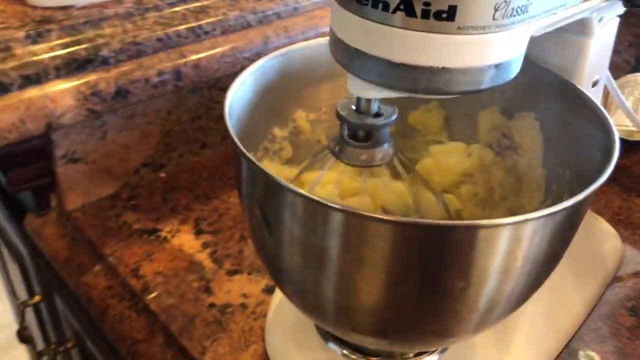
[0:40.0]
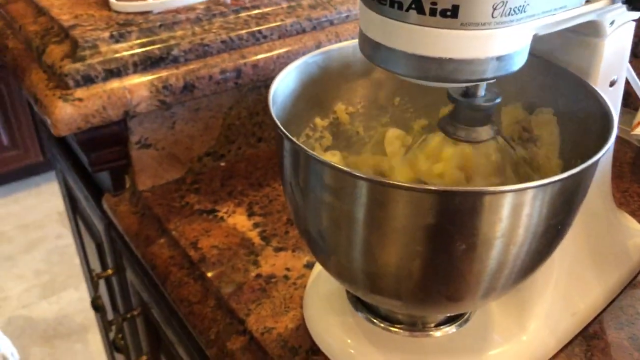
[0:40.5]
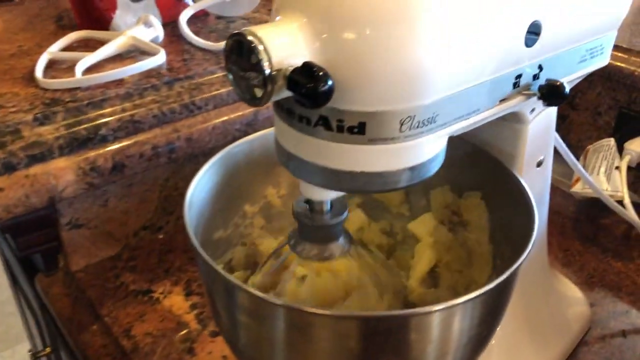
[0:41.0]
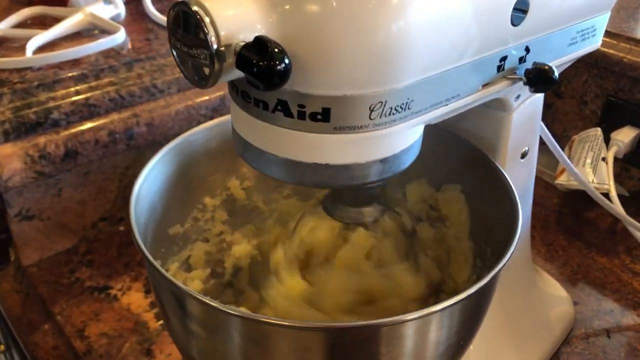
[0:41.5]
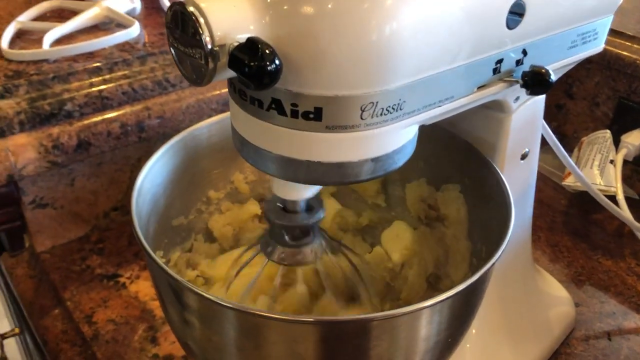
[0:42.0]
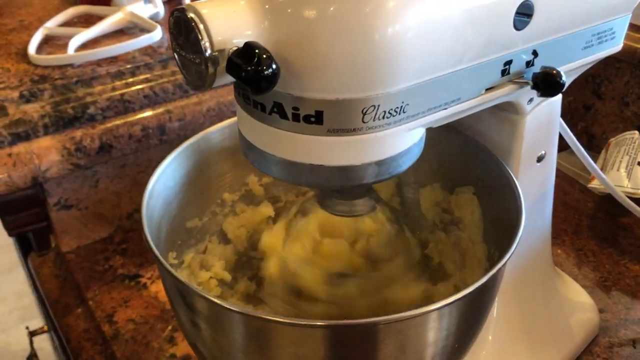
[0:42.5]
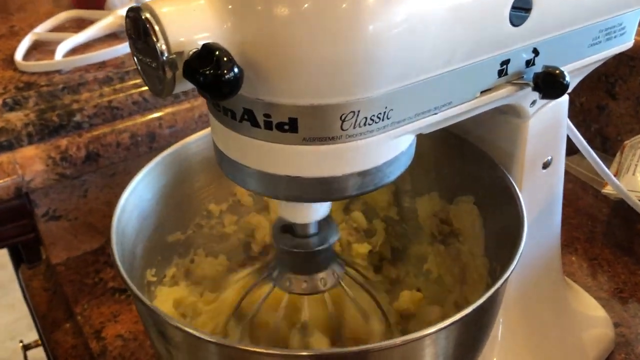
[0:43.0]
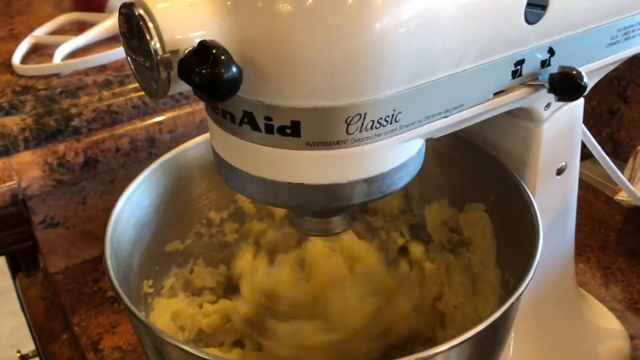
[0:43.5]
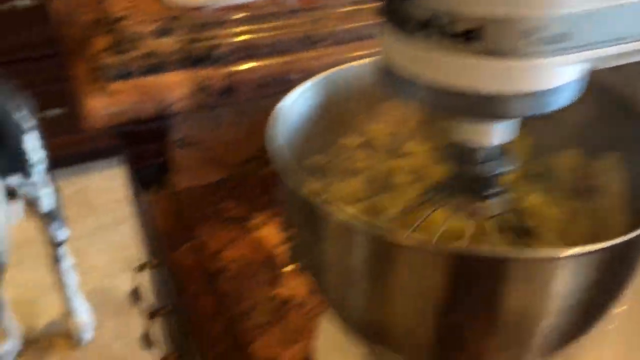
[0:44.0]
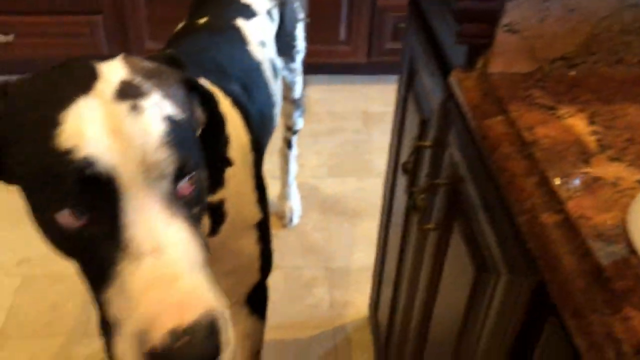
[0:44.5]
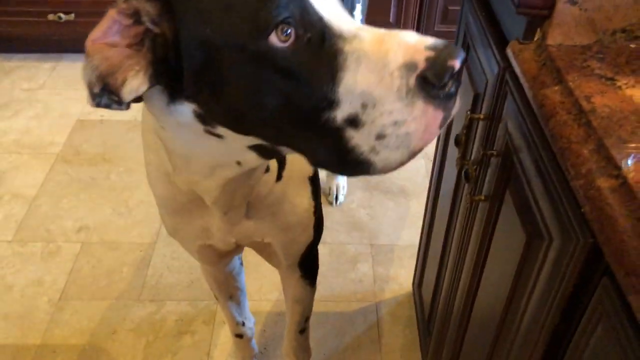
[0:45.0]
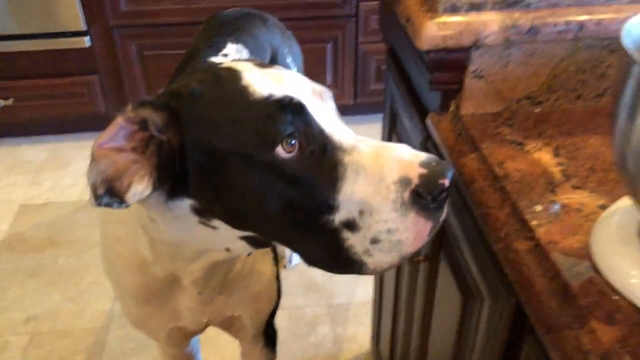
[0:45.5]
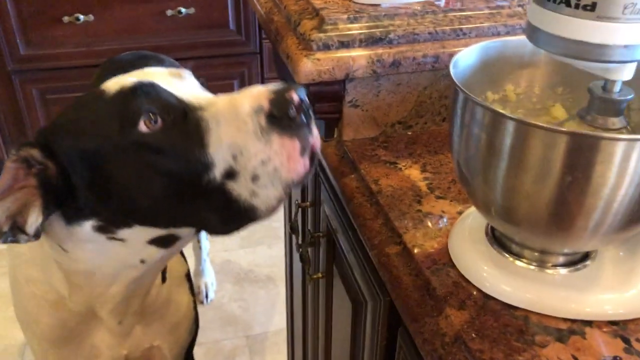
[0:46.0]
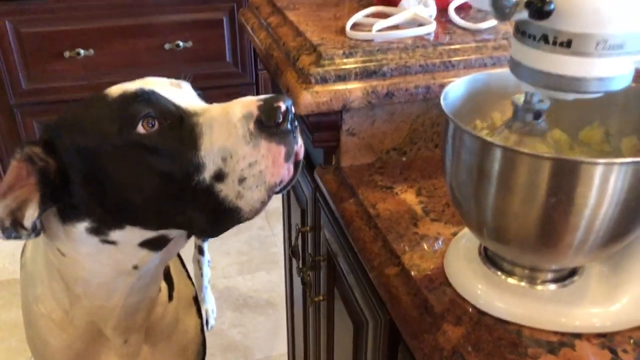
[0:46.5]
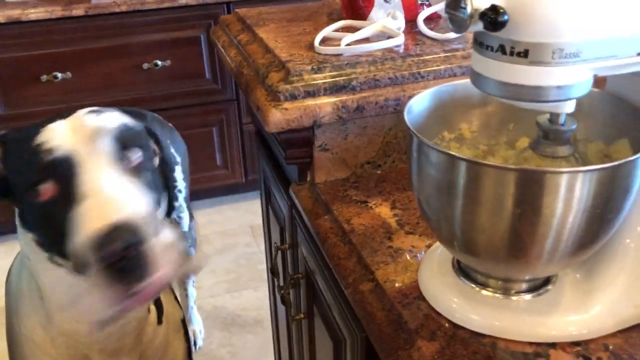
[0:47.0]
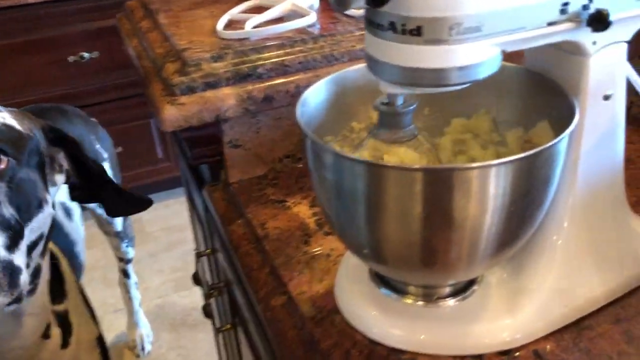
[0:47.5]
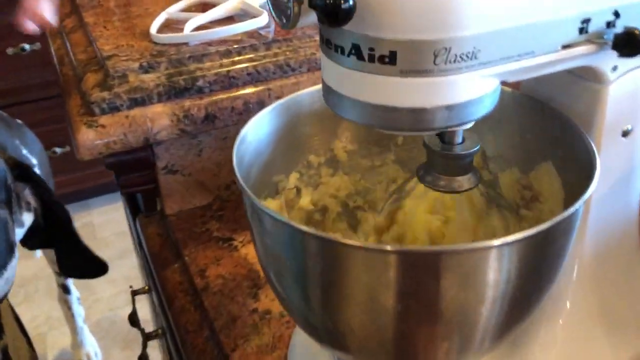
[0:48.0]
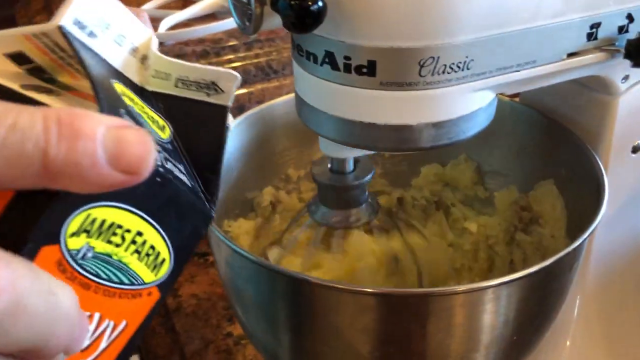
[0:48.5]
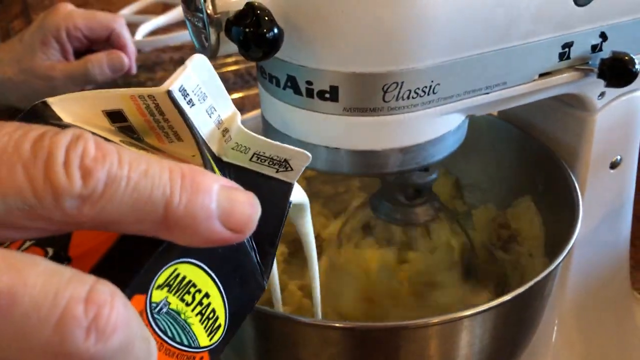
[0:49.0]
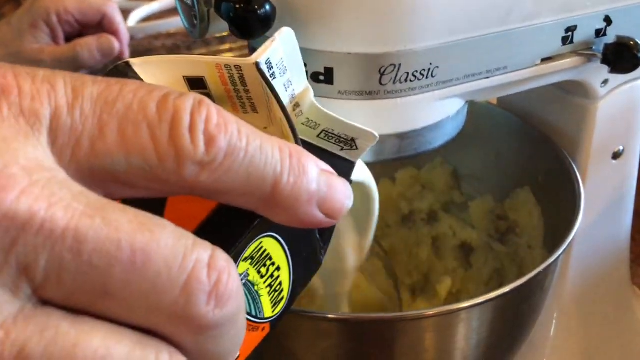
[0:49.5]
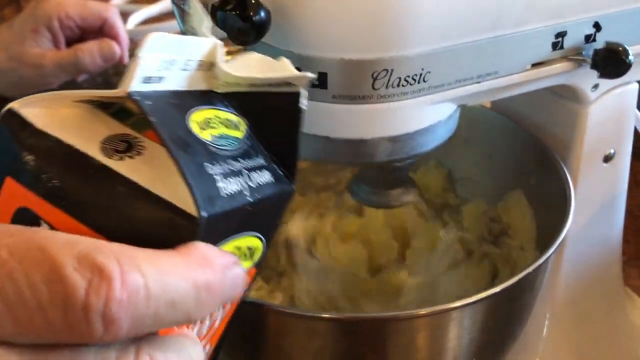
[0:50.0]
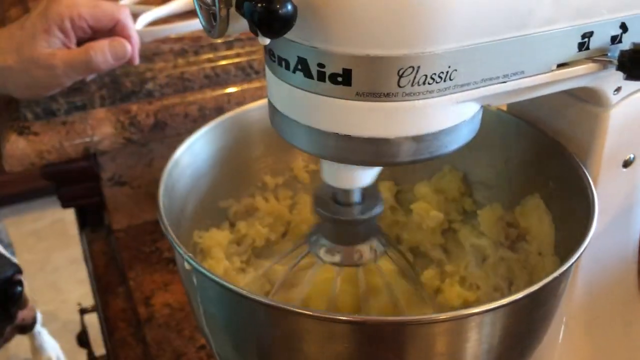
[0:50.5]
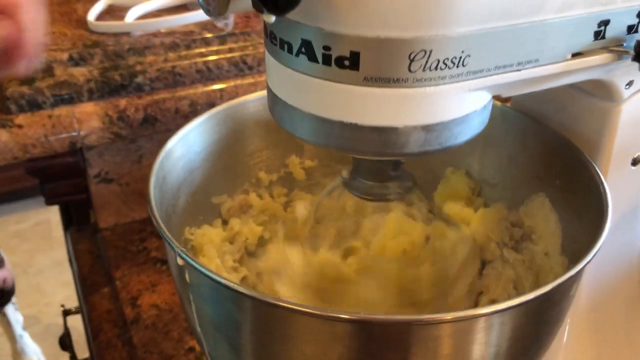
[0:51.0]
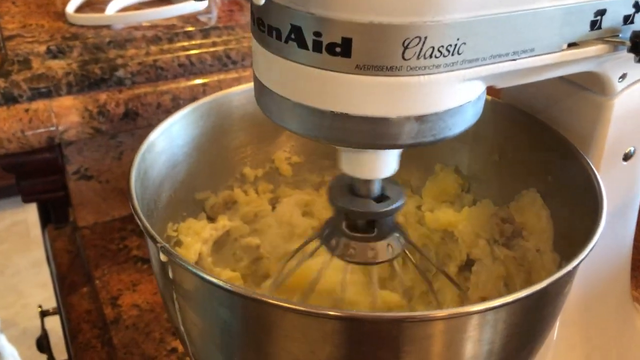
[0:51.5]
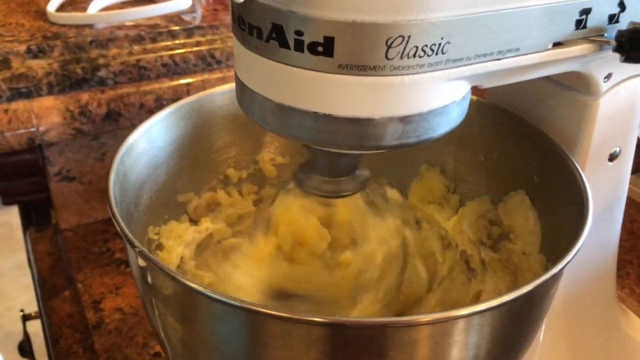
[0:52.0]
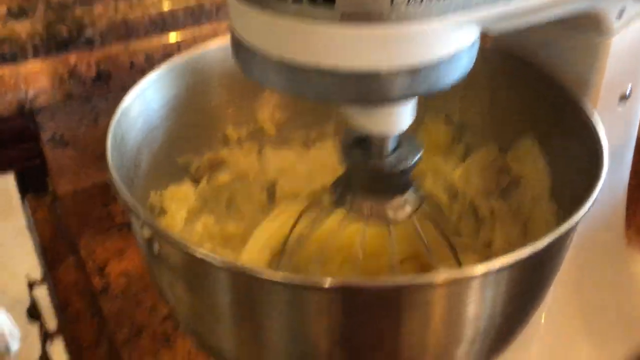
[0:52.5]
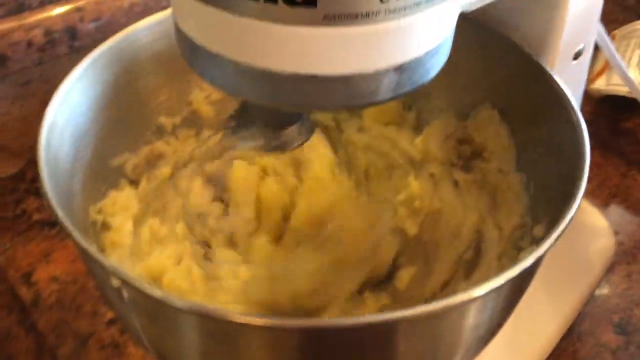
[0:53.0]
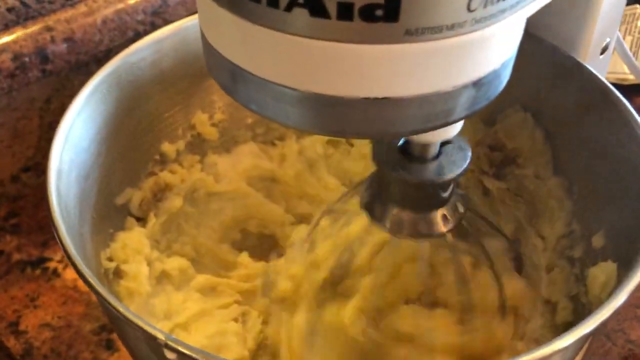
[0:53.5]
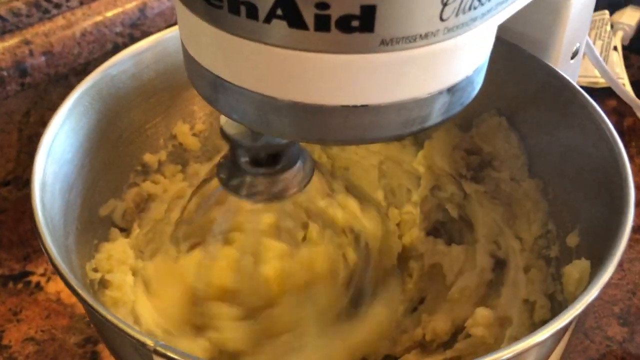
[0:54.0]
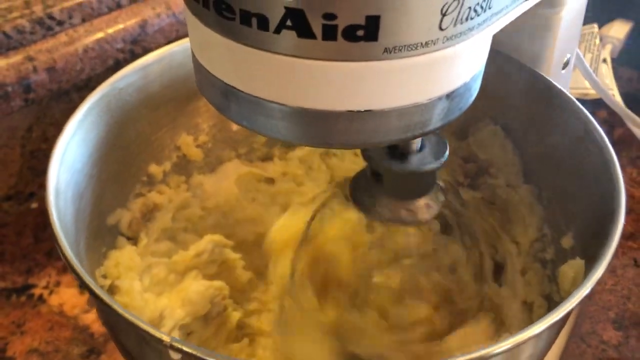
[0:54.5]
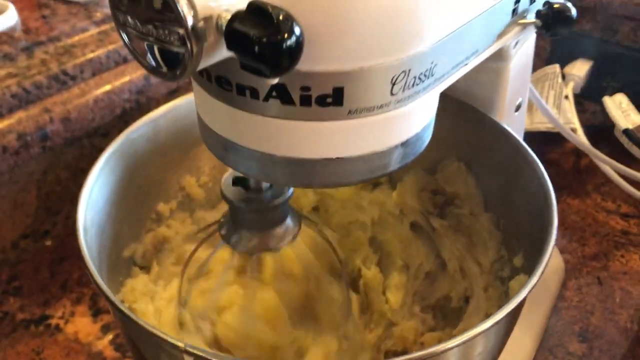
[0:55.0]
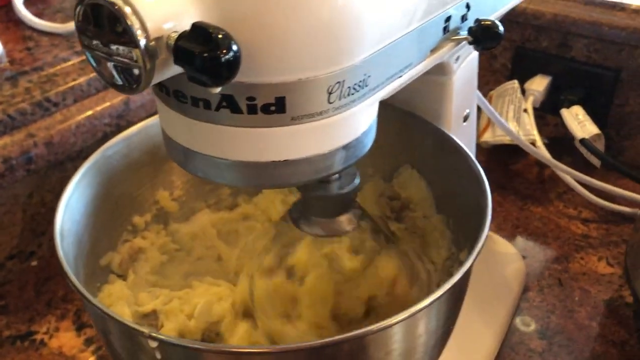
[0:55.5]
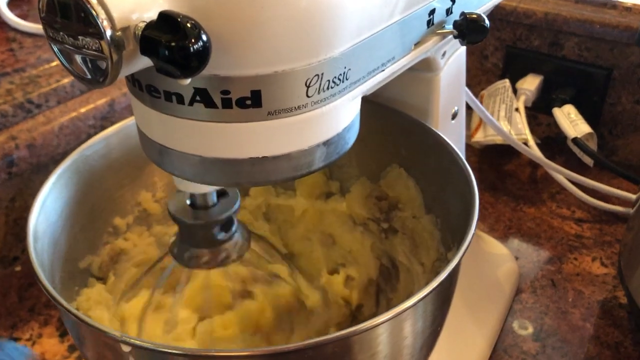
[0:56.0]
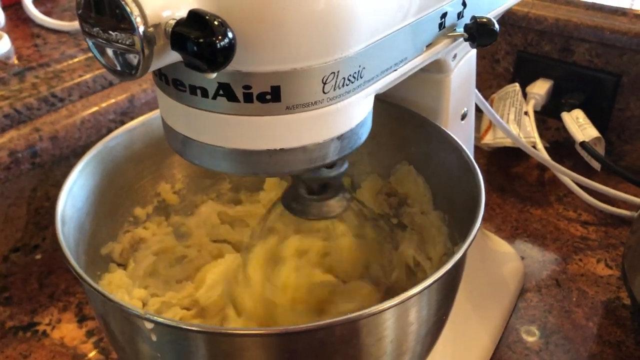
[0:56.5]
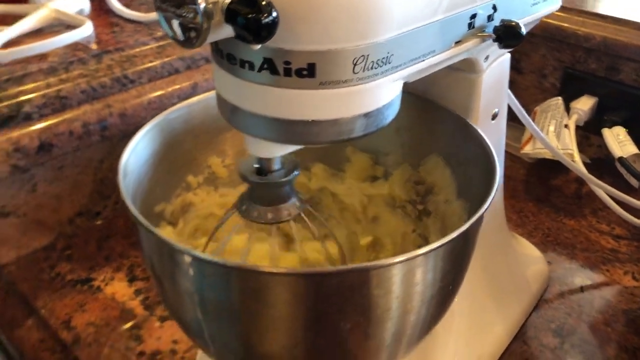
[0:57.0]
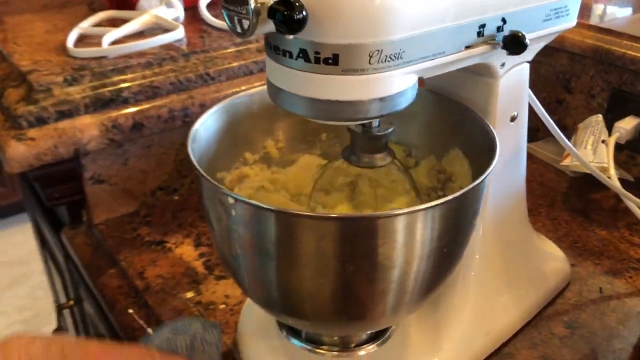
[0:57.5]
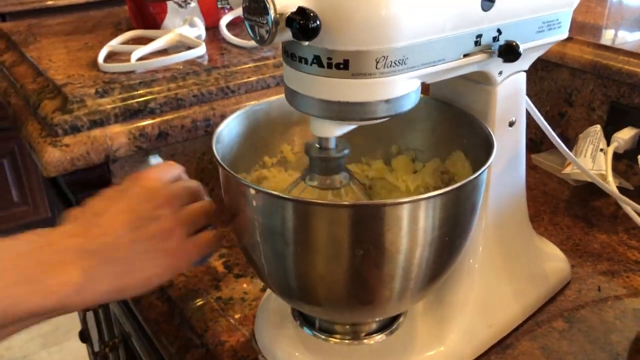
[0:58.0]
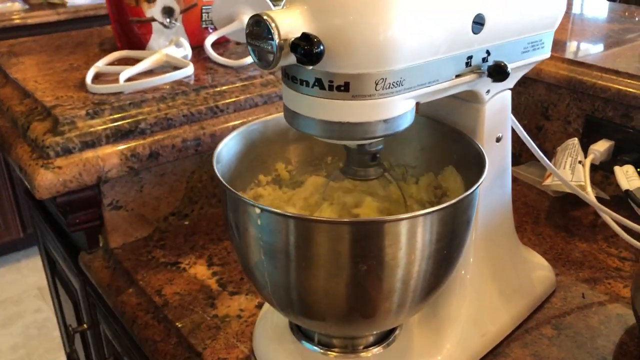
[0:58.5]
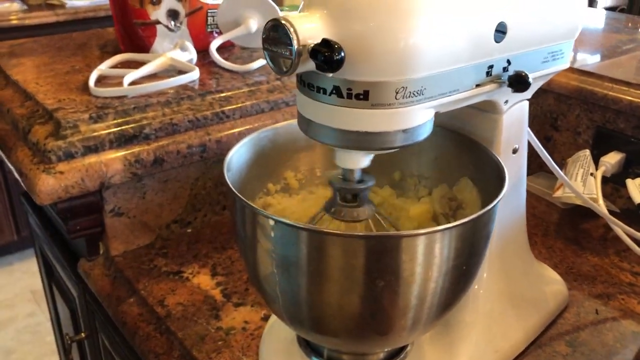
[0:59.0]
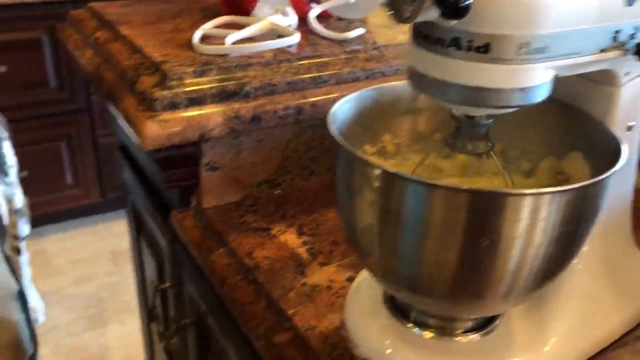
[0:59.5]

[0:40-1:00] The whisk spins vigorously, mixing the mashed potatoes; the texture is not fine yet, but it looks almost there. The top of the electrical whisk has "aid" written on it, along with the word "classic". The Caucasian person pours something that looks like milk from a black and white carton that says "James Farm" into the stainless steel container holding the steaming hot mashed potatoes. The dog gives way so the person can pour. Someone else is holding the camera.